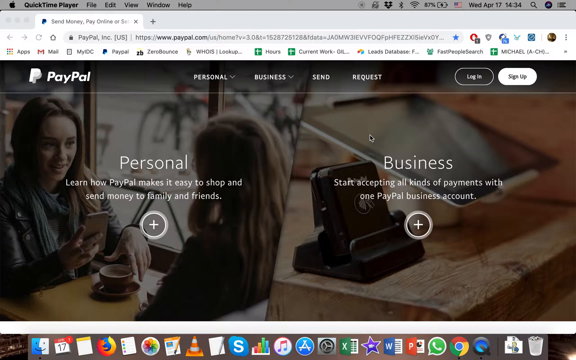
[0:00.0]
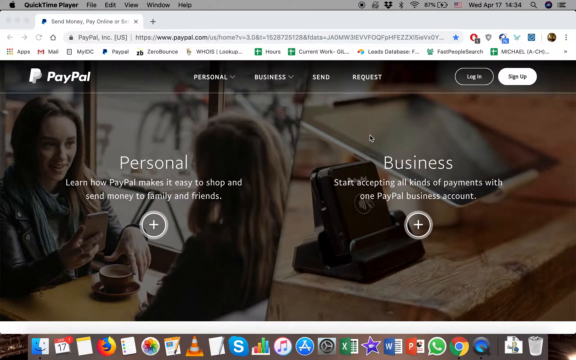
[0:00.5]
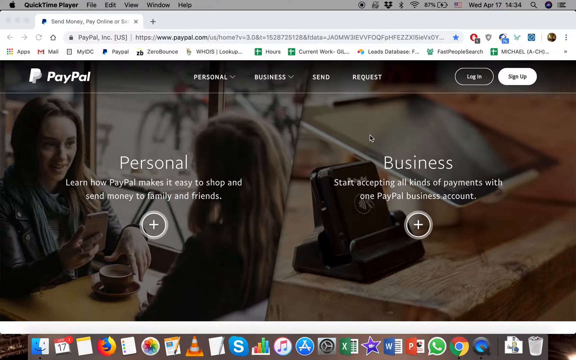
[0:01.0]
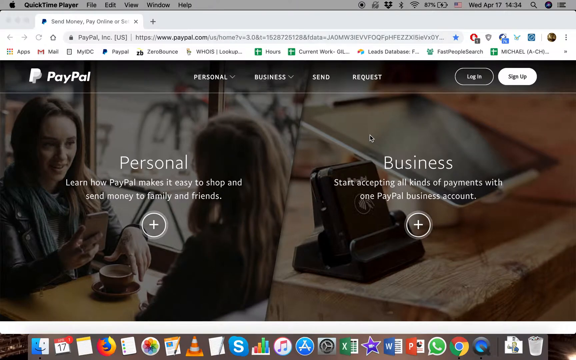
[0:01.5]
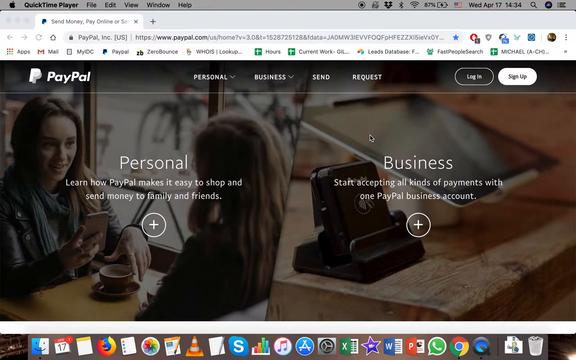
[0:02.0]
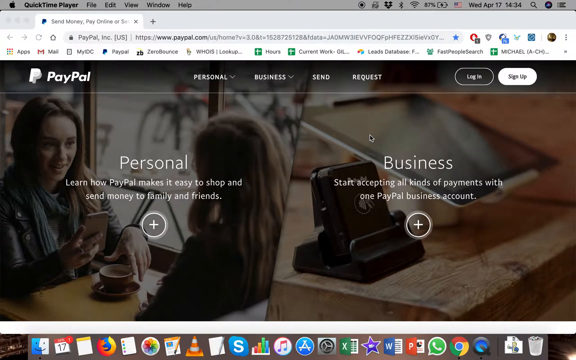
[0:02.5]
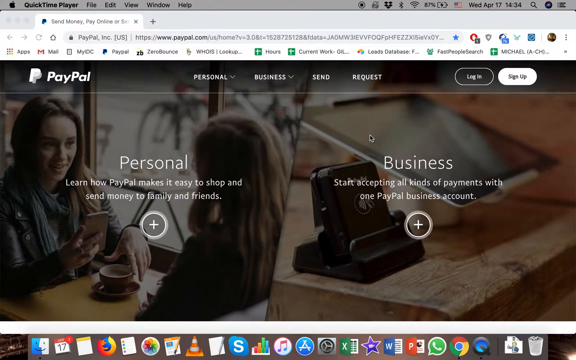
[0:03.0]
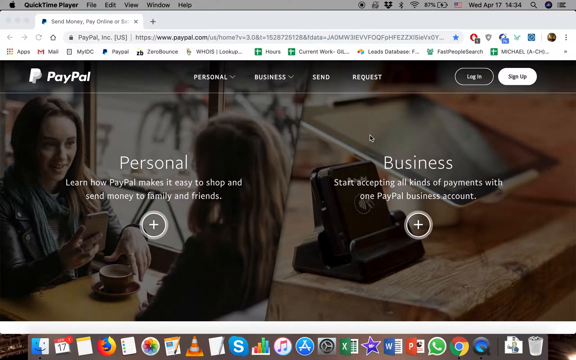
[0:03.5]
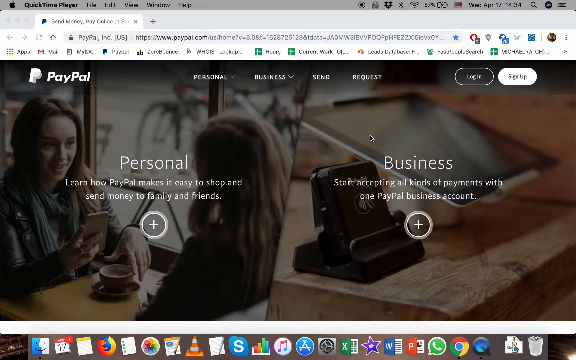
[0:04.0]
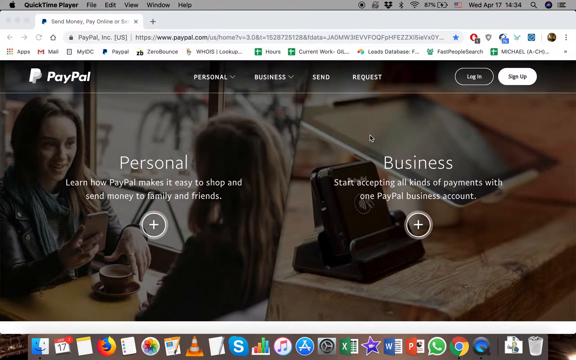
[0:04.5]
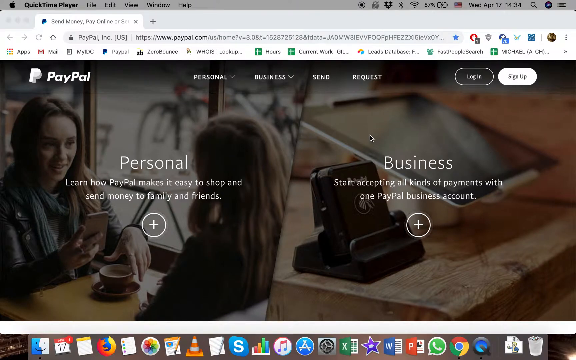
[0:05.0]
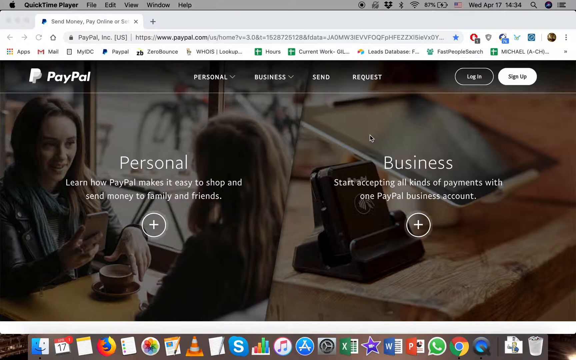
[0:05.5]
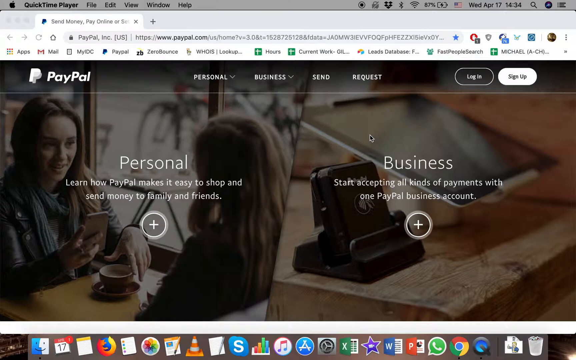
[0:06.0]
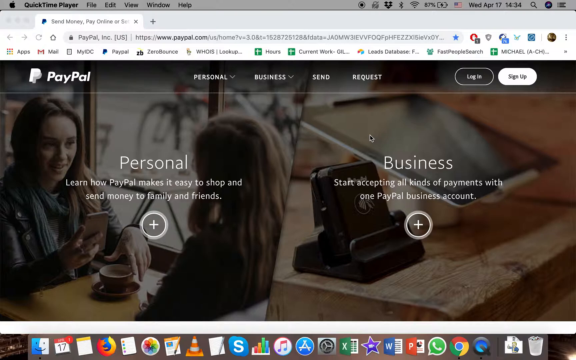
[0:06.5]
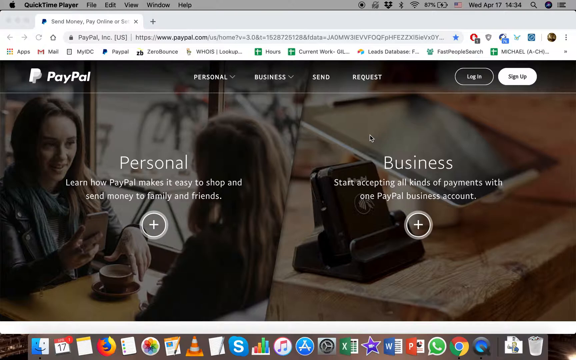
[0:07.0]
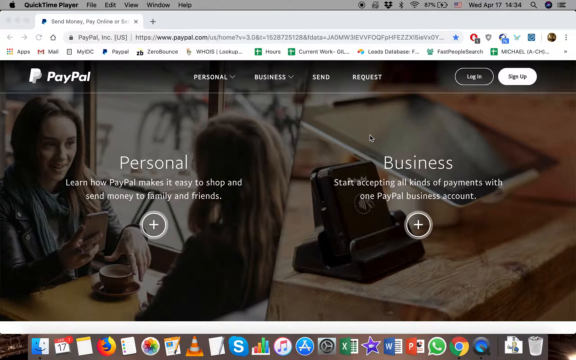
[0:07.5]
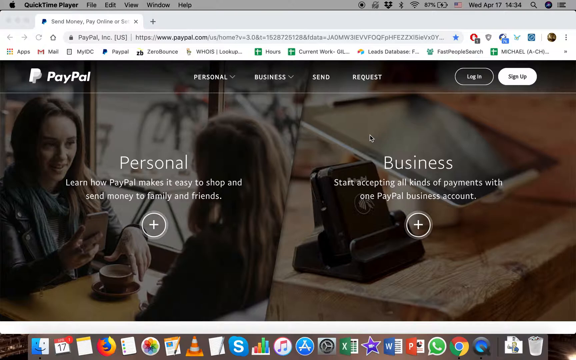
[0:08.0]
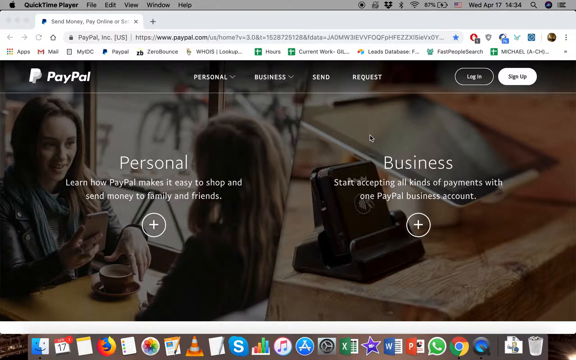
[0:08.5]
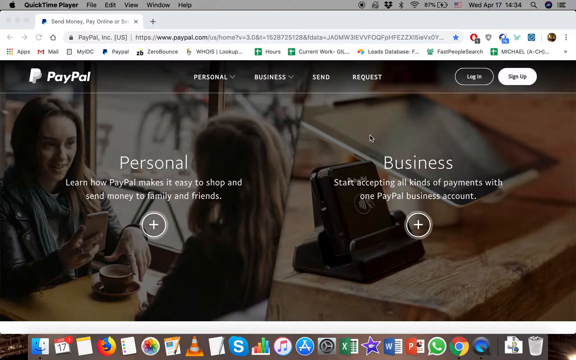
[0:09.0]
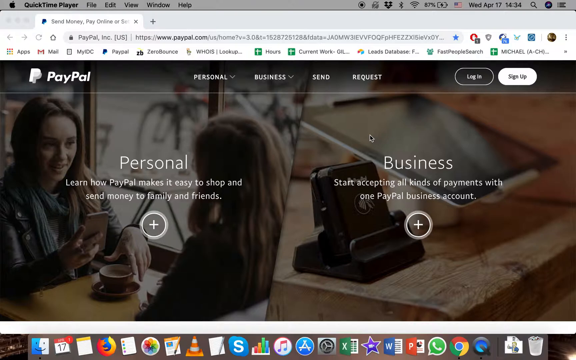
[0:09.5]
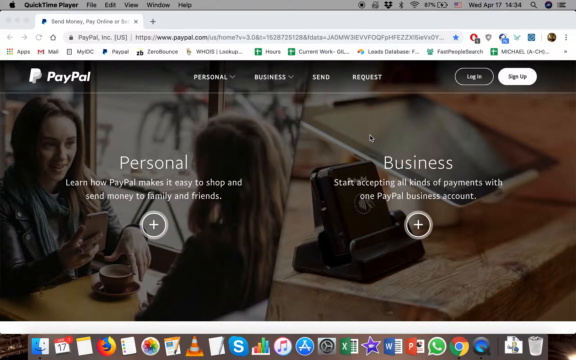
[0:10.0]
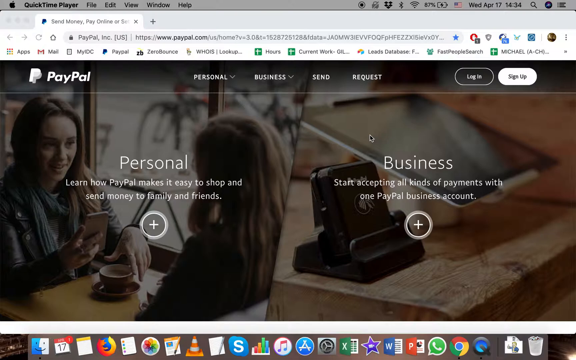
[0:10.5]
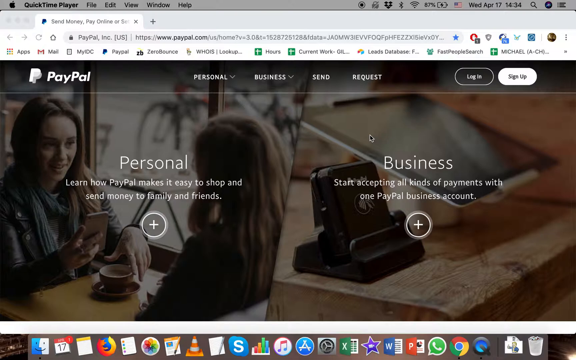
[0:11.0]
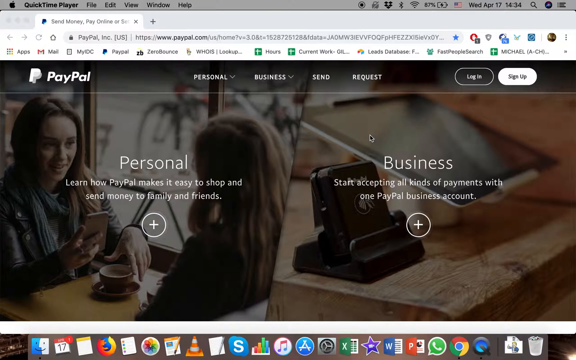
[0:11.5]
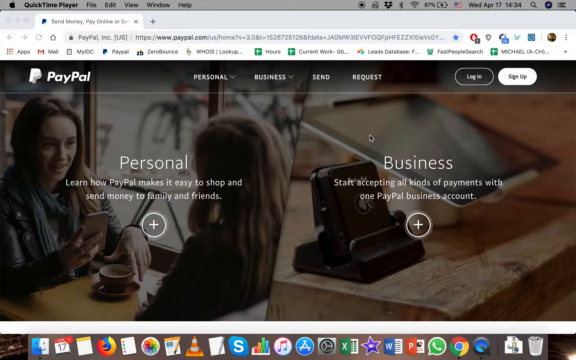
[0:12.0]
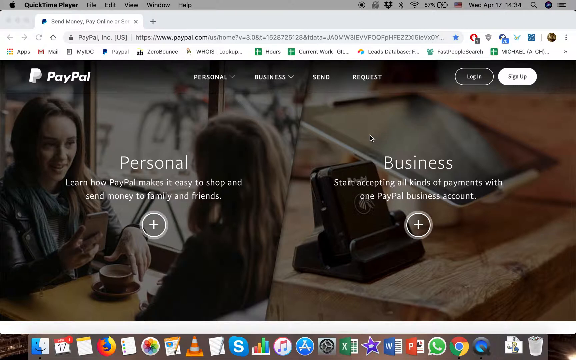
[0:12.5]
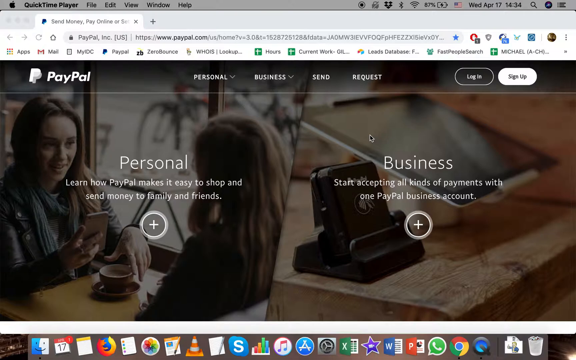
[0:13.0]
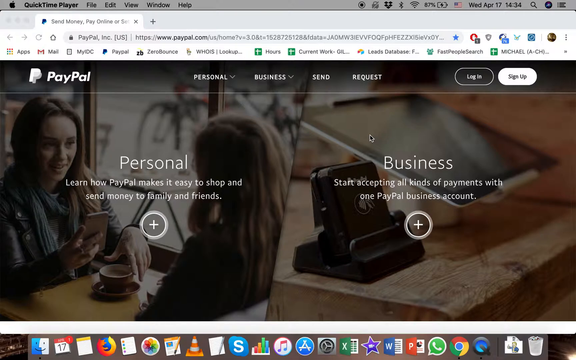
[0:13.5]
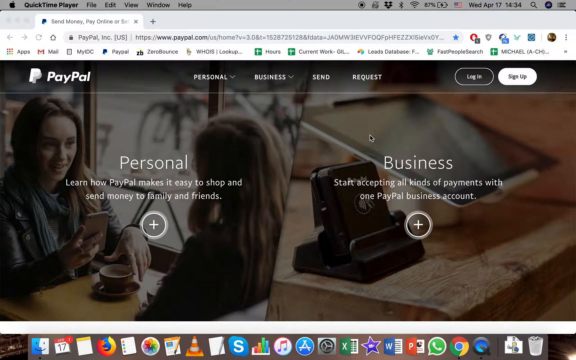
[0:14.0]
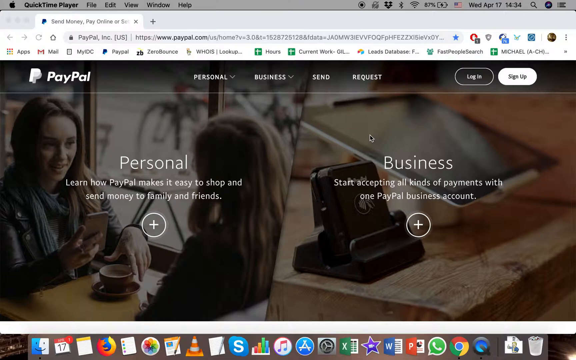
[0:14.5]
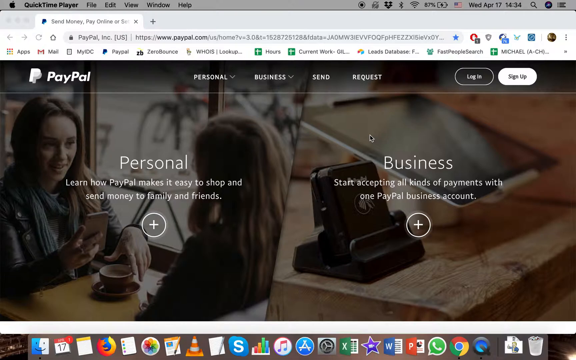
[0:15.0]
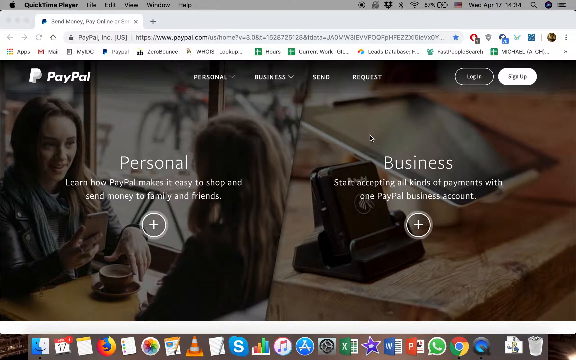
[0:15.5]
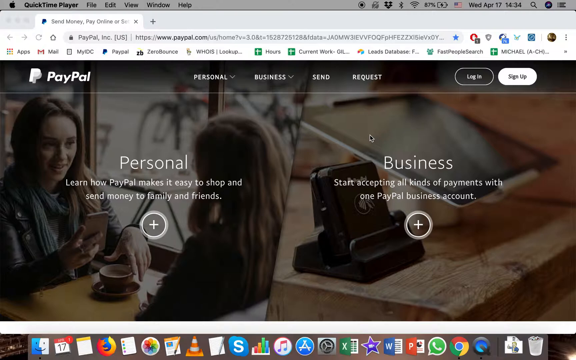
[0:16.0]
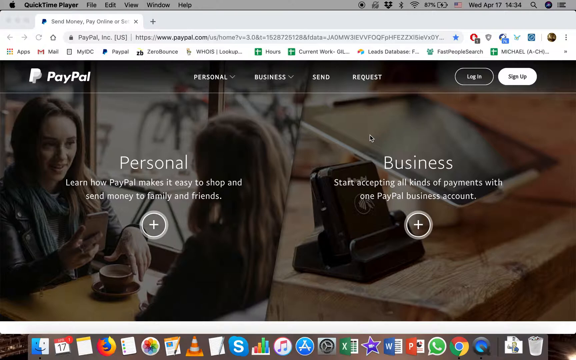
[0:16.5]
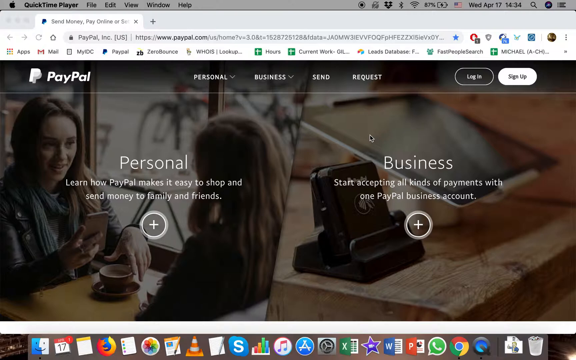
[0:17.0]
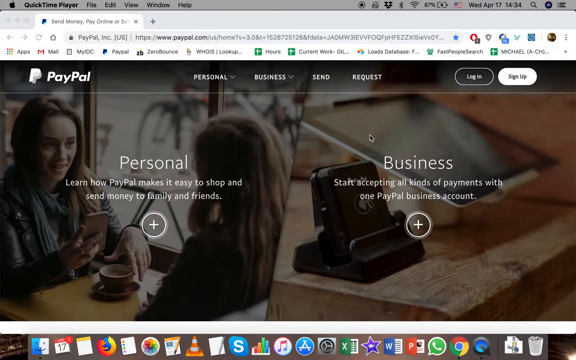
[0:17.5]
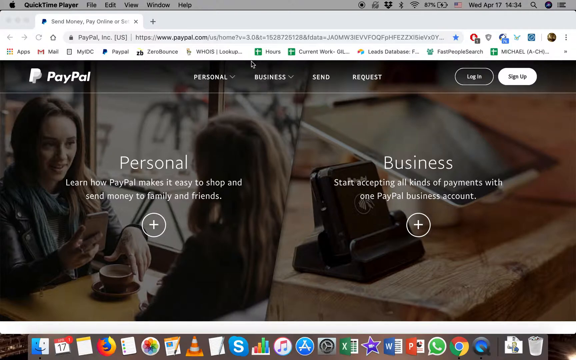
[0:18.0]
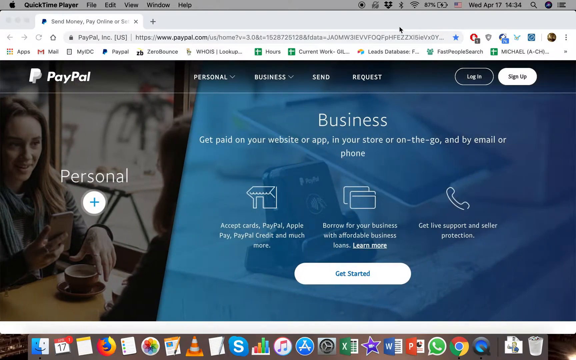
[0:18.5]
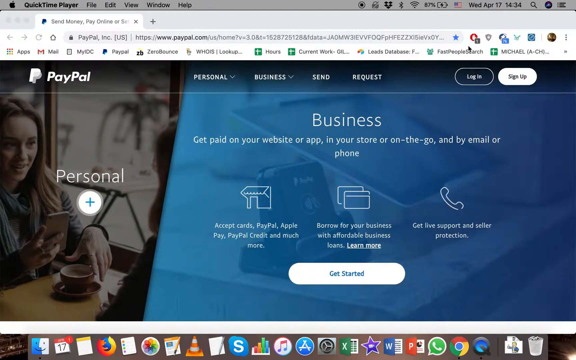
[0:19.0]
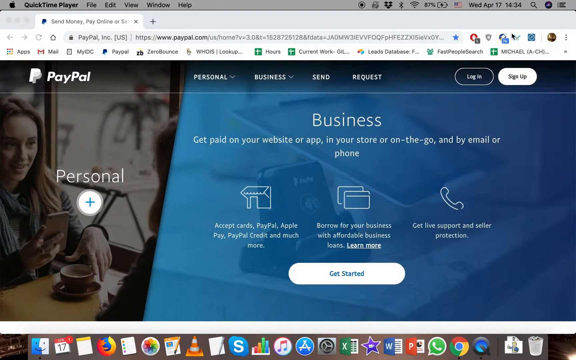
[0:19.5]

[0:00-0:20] Someone records their computer screen, with a web browser open to PayPal.com. The PayPal homepage is shown, not logged in. At the top left are the PayPal logo and several options reading "personal," "business," "send," and "request." At the top right are two buttons, one reading "login" and, to its right, one reading "sign up." The homepage shows two additional options. The left half shows personal and reads "learn how PayPal makes it easy to shop and send money to family and friends." The right side reads "business. Start accepting all kinds of payments with one PayPal business account." Only one tab is open in the browser. The user stays on the homepage for some time and eventually clicks on the business half of the homepage, which expands the business section.